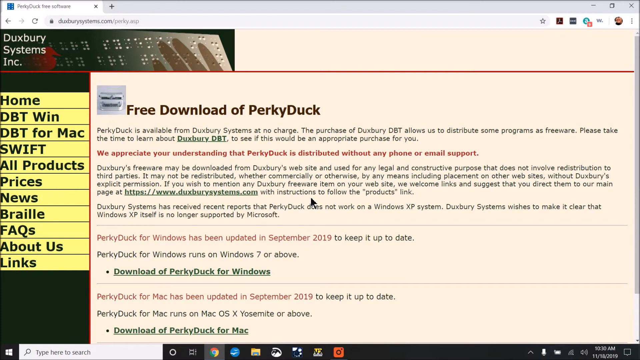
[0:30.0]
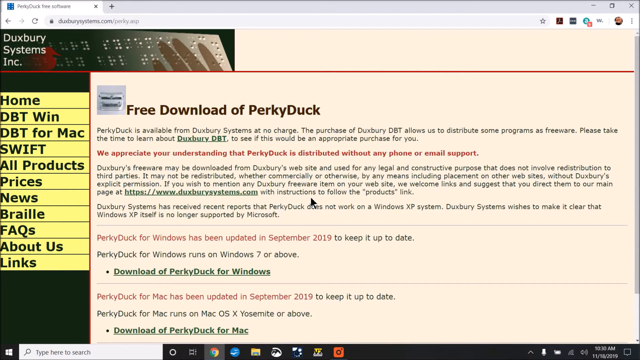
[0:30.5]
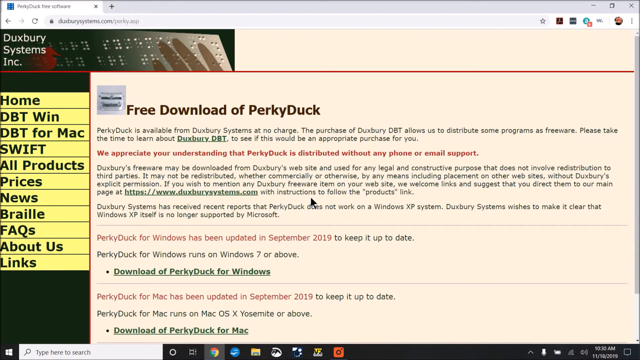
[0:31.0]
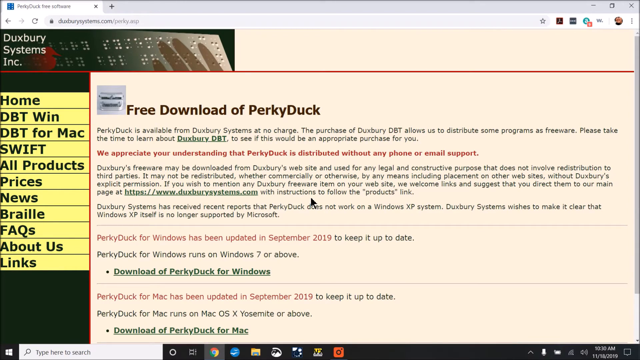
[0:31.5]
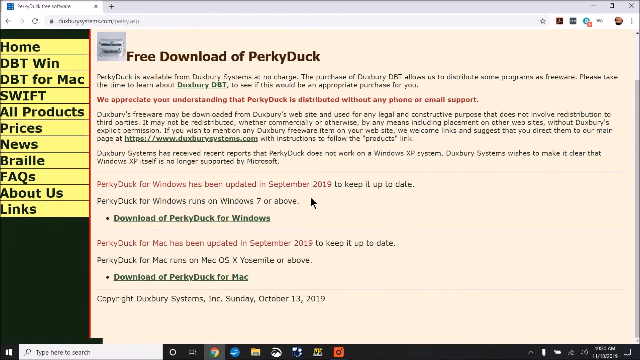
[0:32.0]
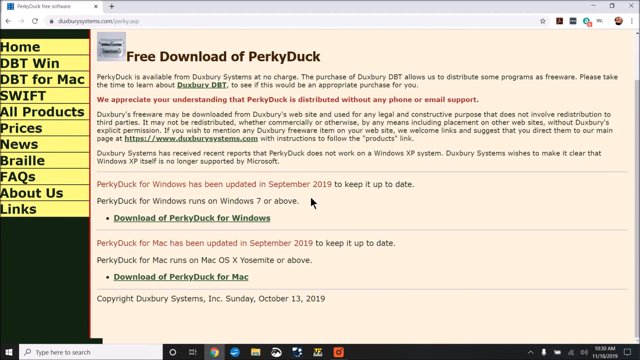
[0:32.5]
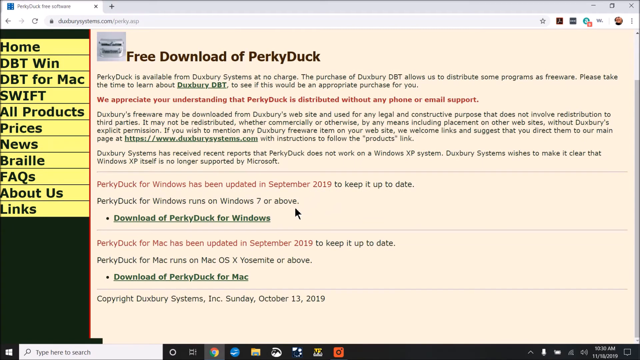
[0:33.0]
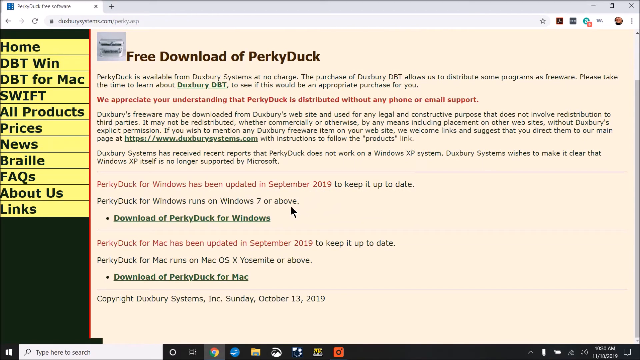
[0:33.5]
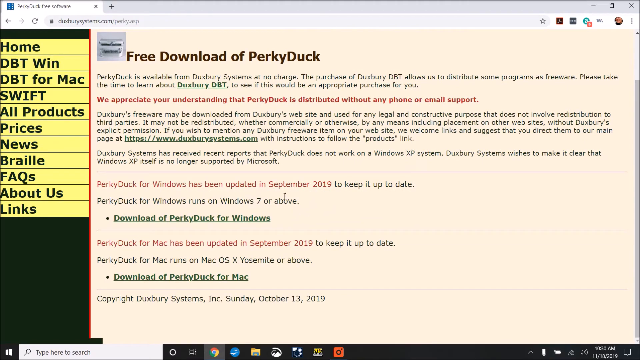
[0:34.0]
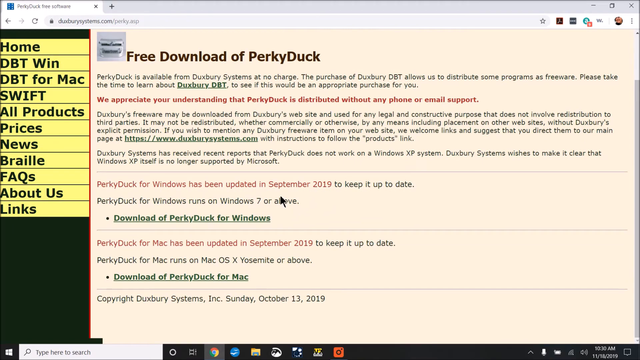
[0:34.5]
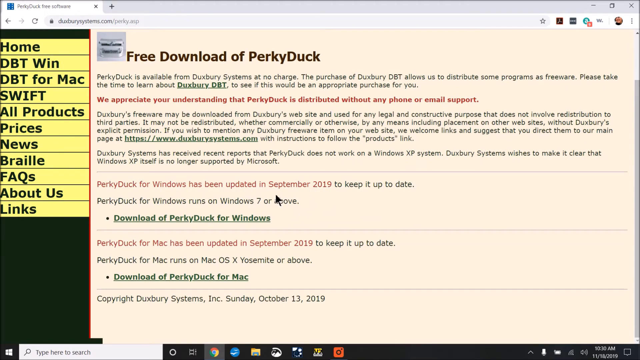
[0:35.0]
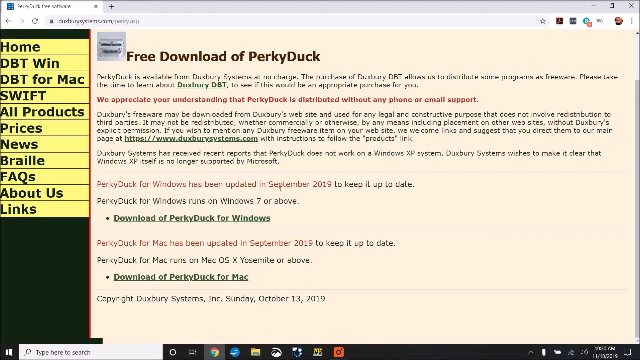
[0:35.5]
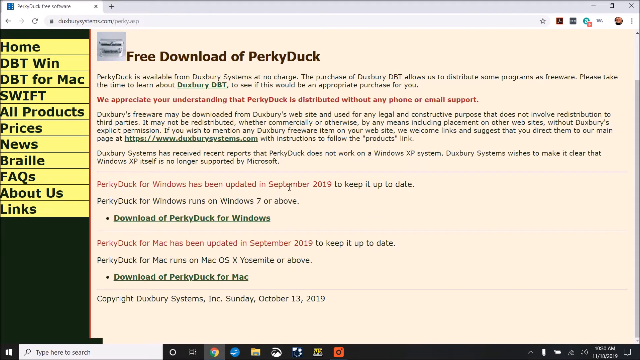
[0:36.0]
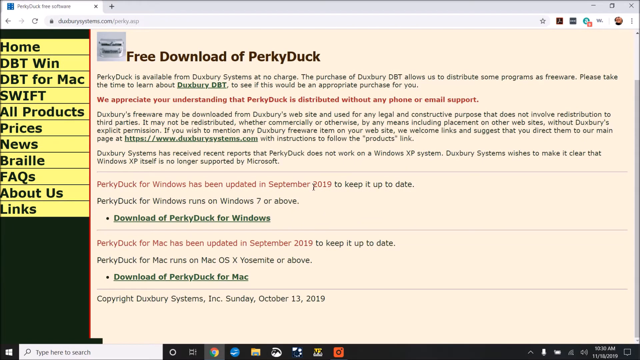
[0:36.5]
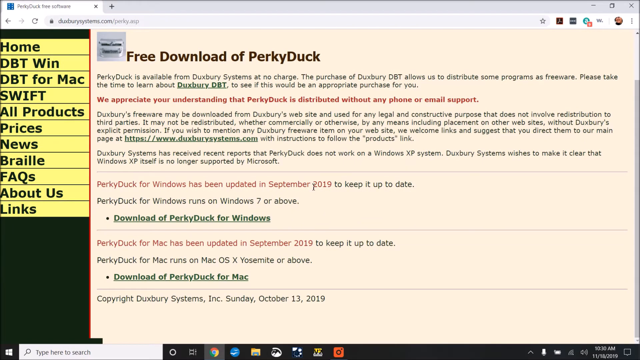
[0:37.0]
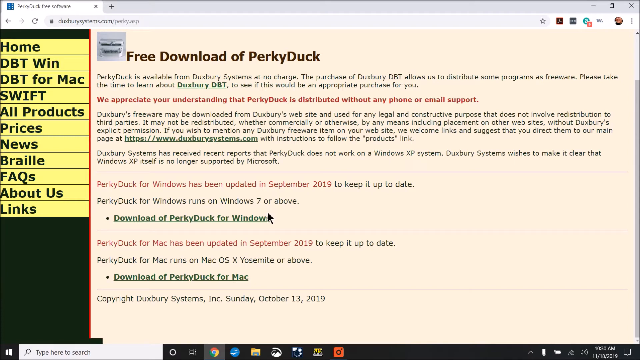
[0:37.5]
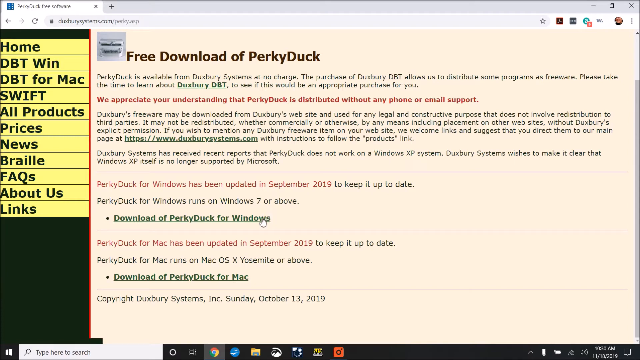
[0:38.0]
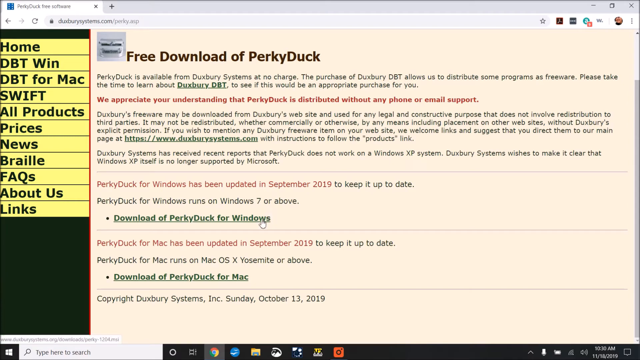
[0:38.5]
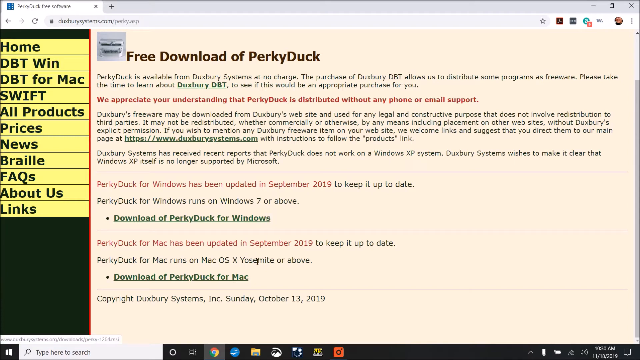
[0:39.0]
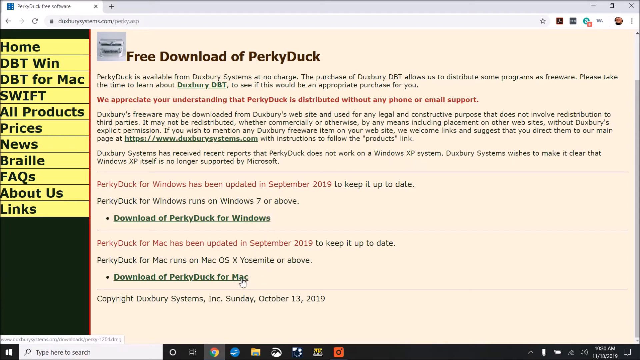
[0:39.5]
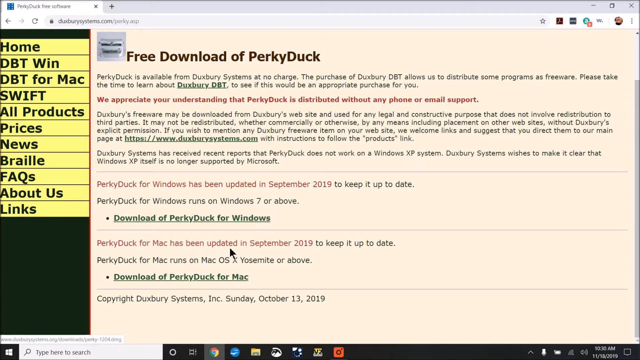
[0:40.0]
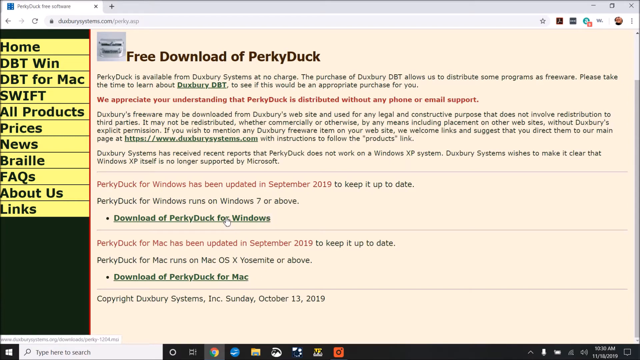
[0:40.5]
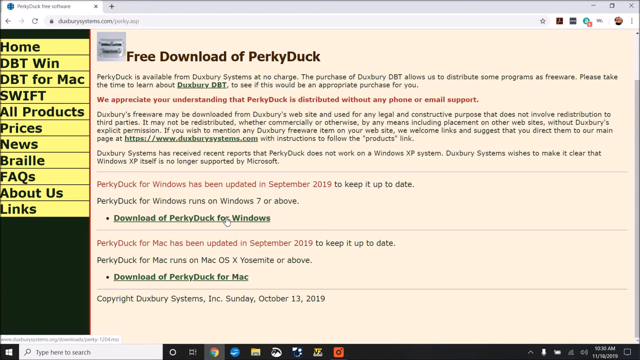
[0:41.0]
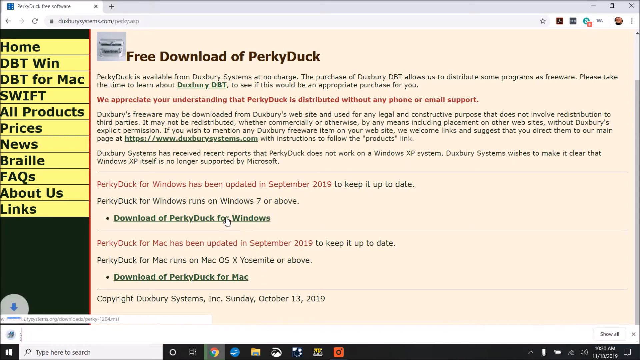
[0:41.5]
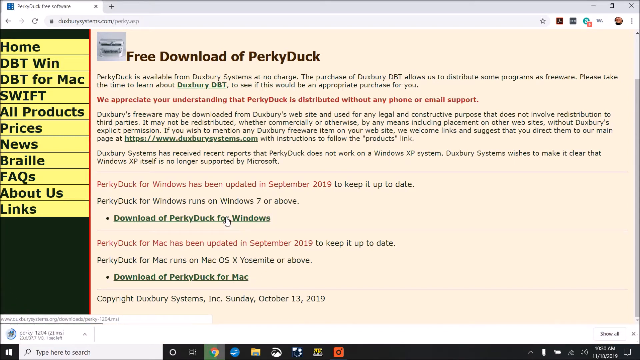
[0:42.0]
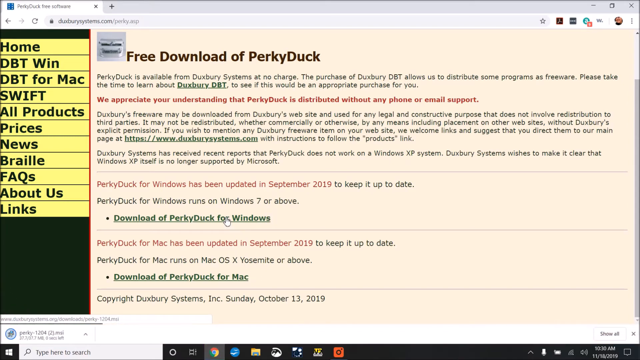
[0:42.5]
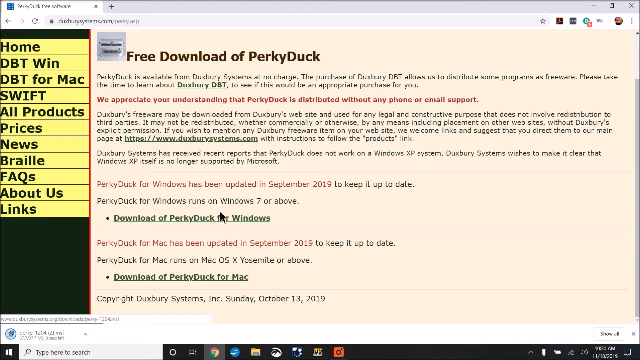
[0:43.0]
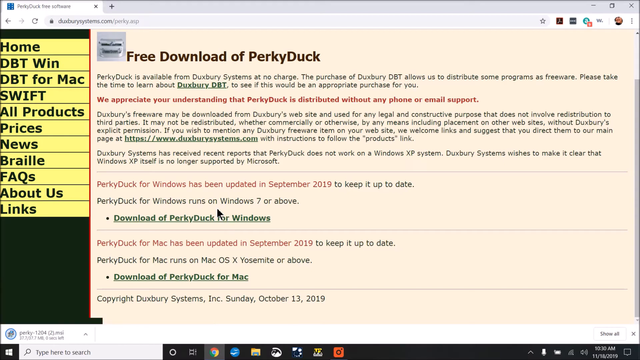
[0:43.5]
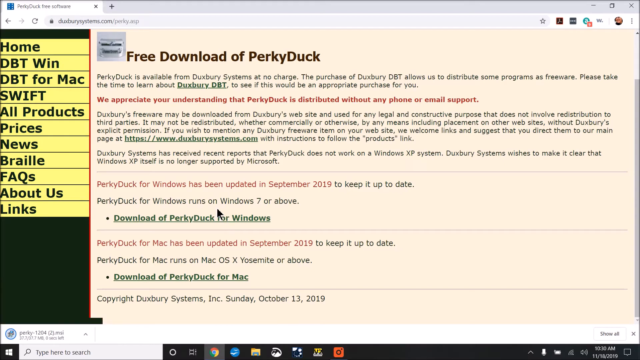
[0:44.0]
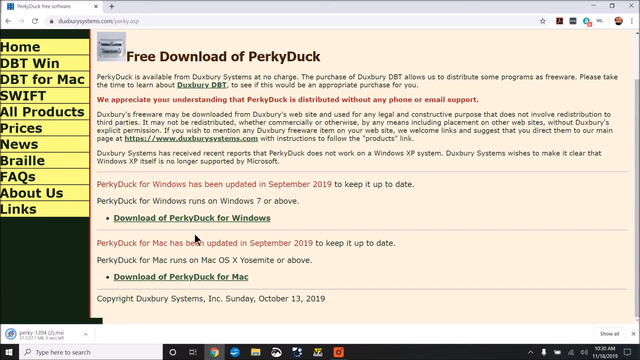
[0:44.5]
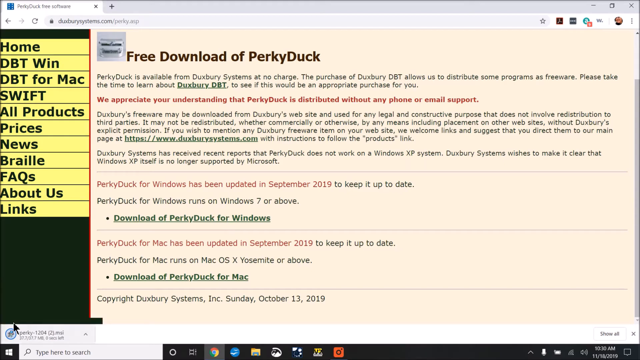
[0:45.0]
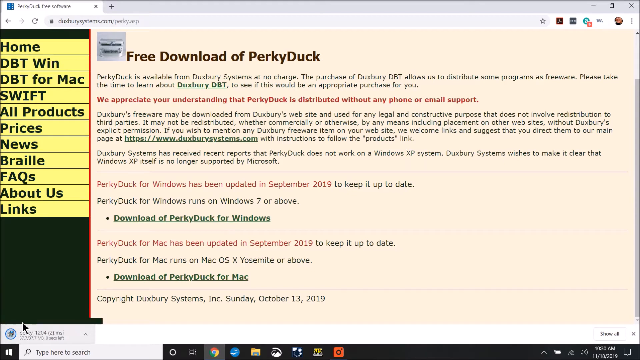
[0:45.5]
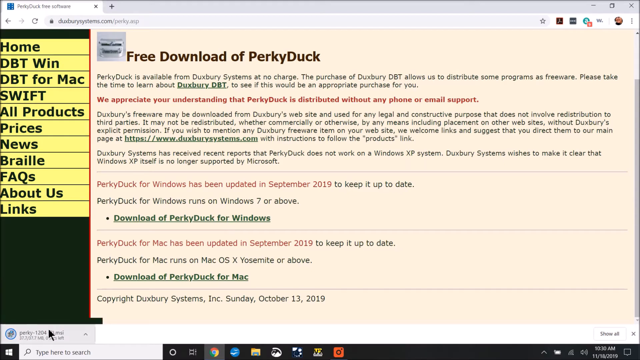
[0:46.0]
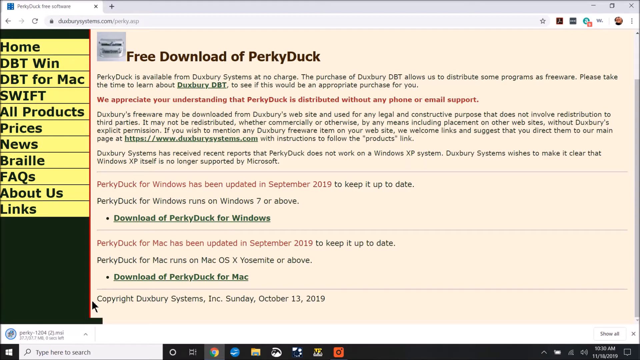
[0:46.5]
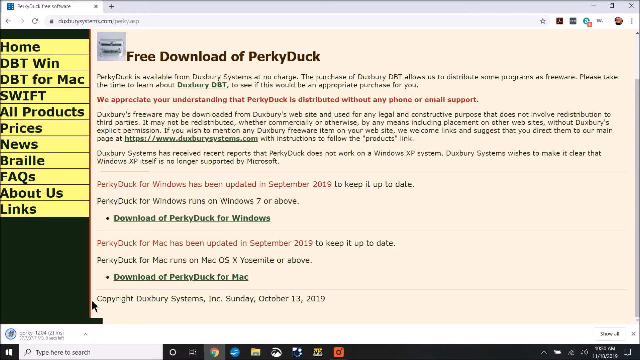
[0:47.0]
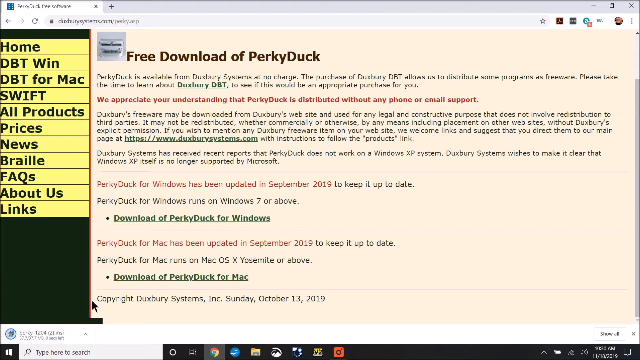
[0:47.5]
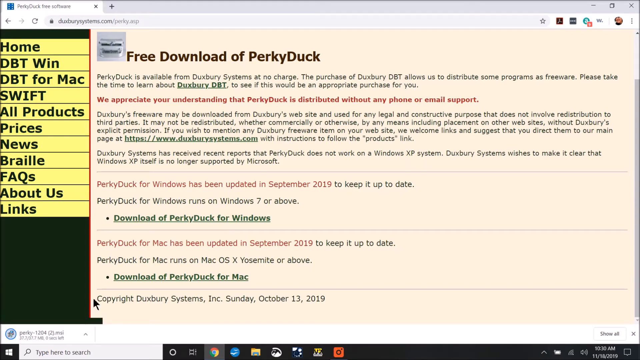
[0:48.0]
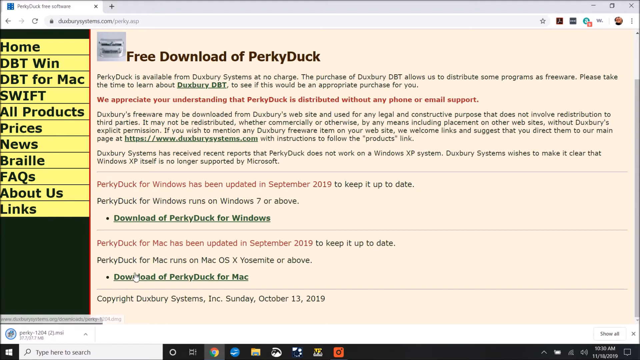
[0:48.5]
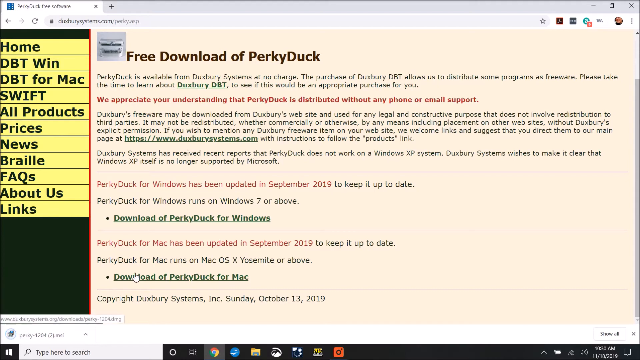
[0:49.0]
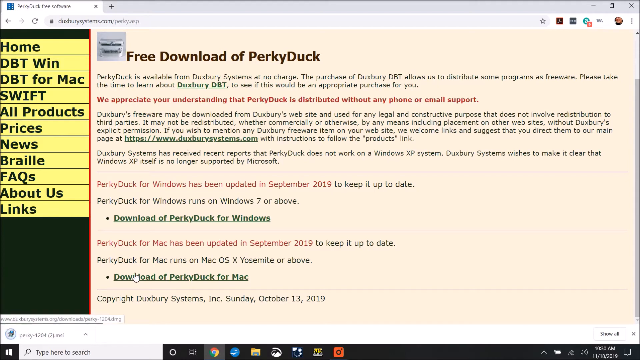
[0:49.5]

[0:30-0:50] On the Perky Duck page, the user scrolls down and hovers over some lower red text that reads "Perky Duck for Windows has been updated in September 2019." The rest of the text is in black and says "to keep it up to date". There is a Windows version for Windows 7 or above, and below that a Mac version, also updated in September 2019. Some of the text above states that it does not work on Windows XP and that Windows XP itself is no longer supported by Microsoft. The cursor moves between Windows and Mac before clicking on Windows, and the file downloads, with a download progress circle on the downloaded executable in the bottom left. Once the download is finished, the cursor makes a few counter-clockwise circles to indicate that it has been downloaded.